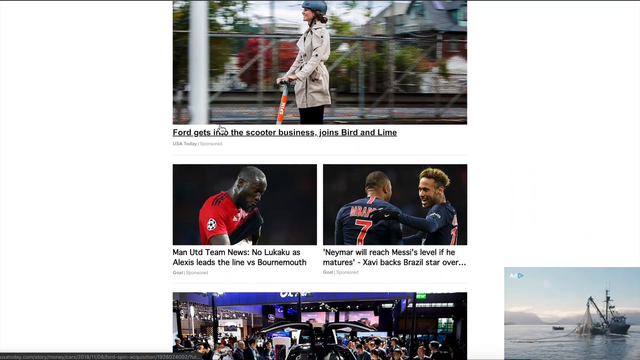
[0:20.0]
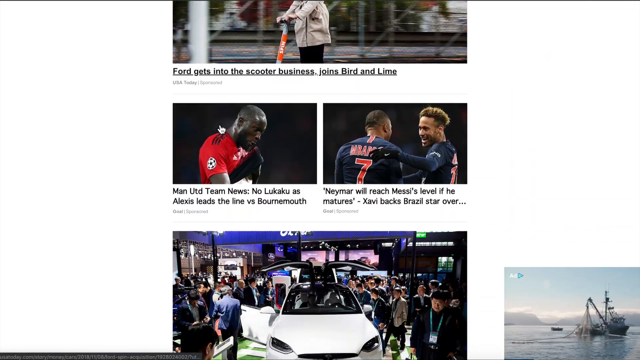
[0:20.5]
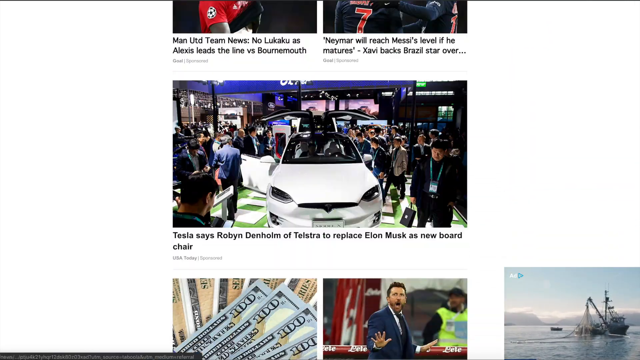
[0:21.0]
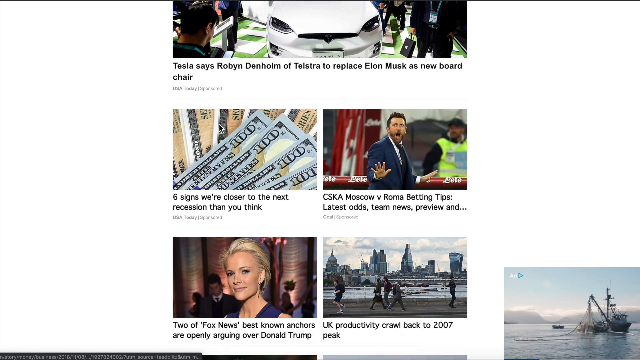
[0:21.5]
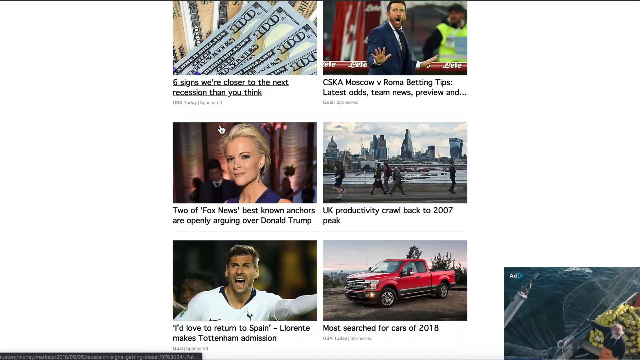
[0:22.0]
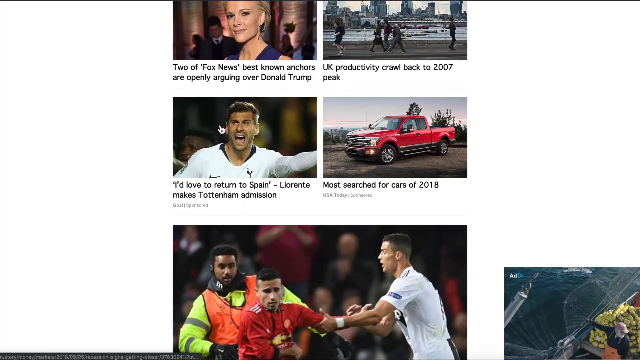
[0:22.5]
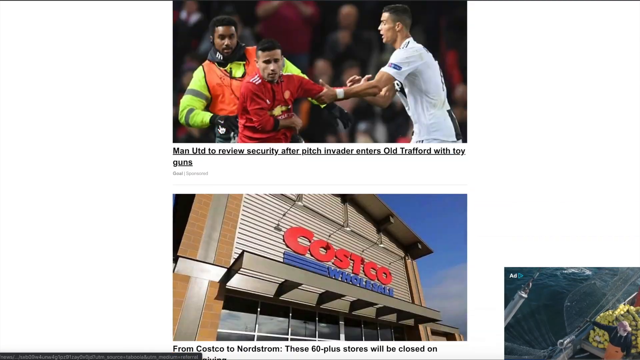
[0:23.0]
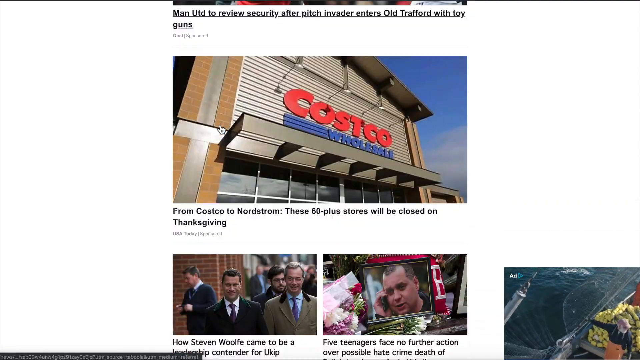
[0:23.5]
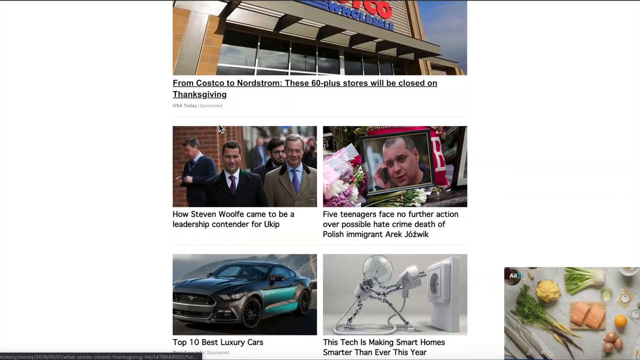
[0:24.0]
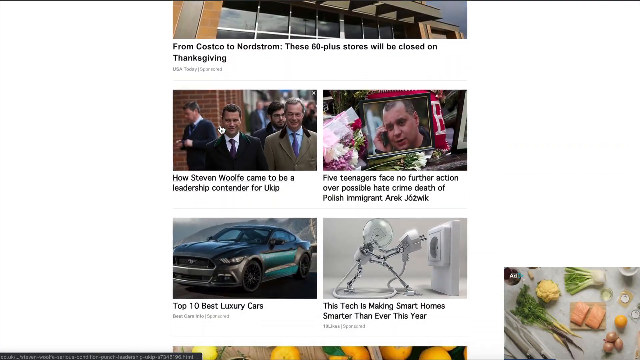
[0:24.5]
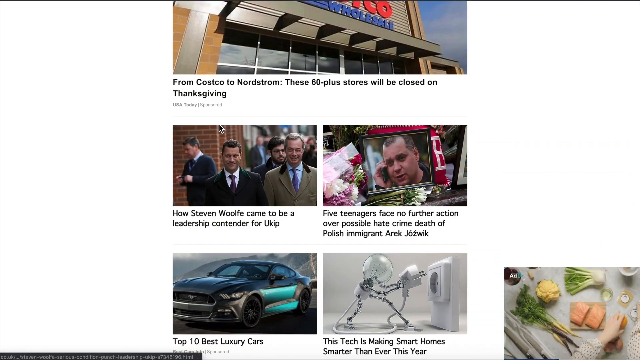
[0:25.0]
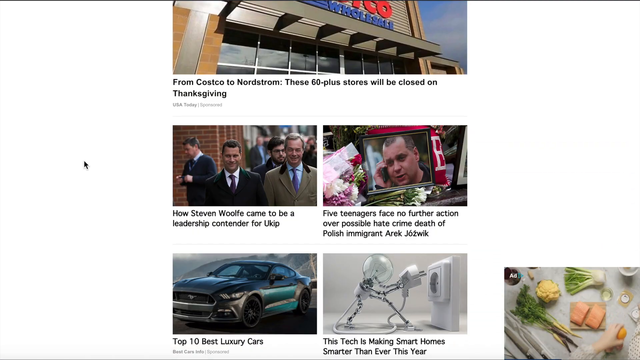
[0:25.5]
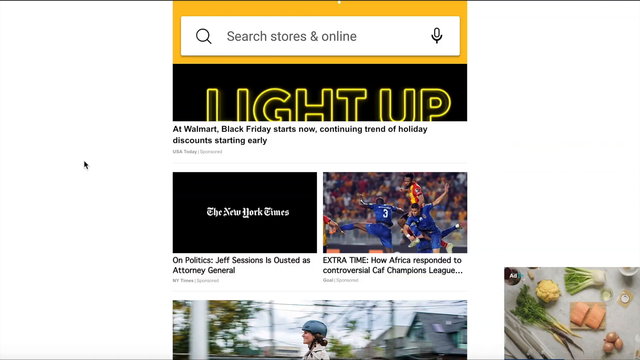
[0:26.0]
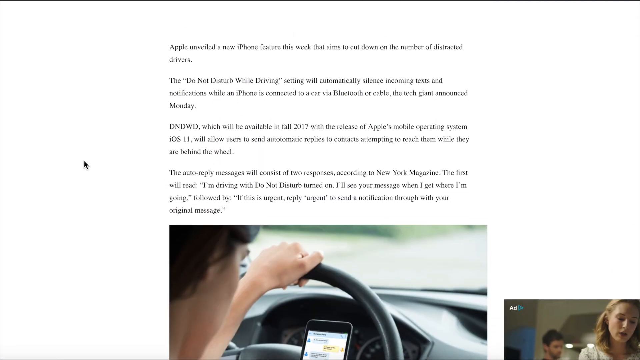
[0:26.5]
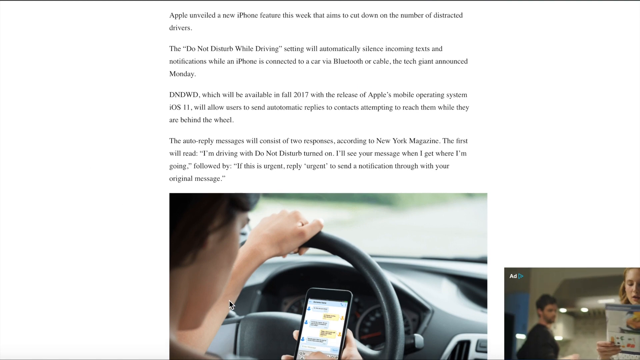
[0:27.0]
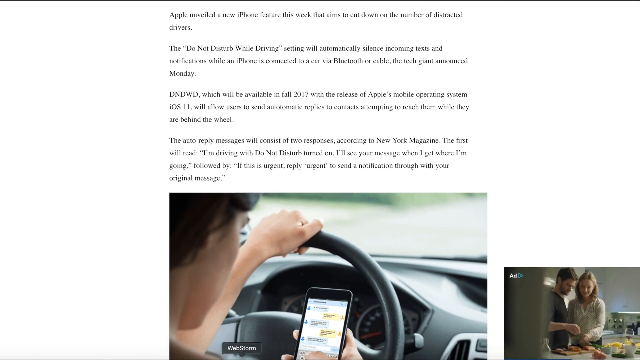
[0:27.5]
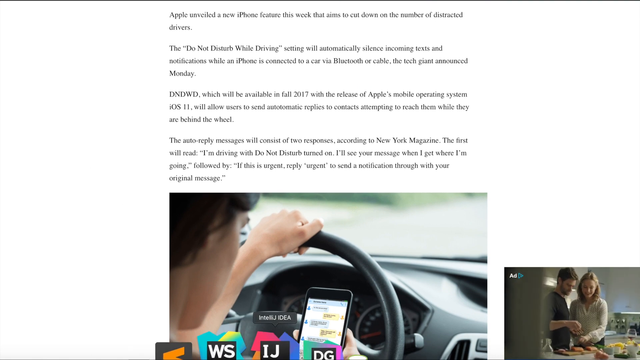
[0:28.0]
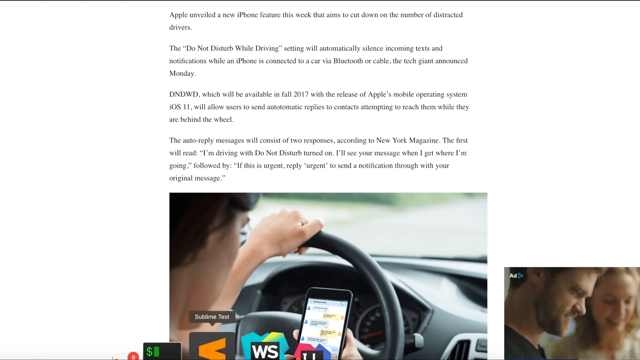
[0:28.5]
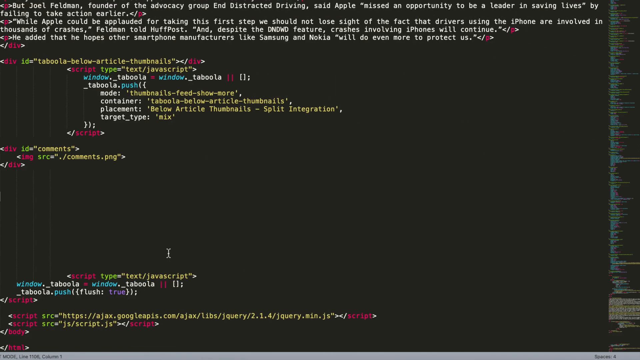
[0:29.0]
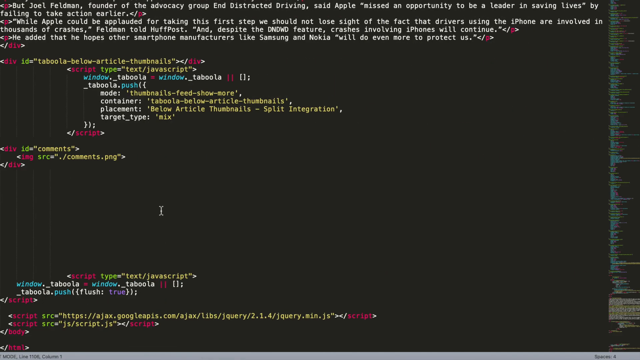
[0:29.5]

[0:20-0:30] Someone scrolls through a news article about an iPhone feature. At the bottom there are other stories to click on, a collection of different stories a reader might be interested in. The view then switches to code; someone appears to have opened the page's source code, which shows HTML. The code contains the same text as the article about Apple and its do not disturb while driving feature, followed by a JavaScript section for the thumbnails of all the extra articles at the bottom.